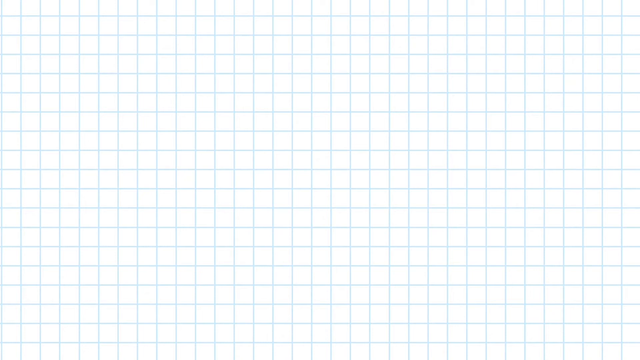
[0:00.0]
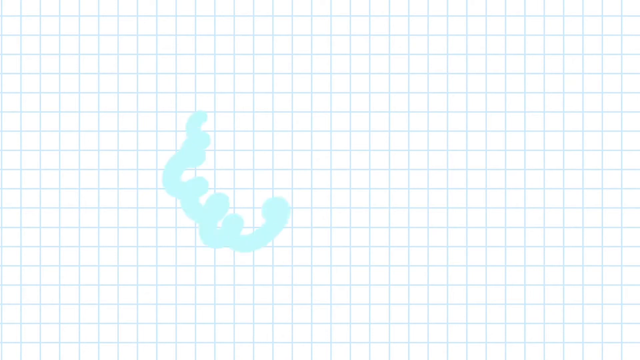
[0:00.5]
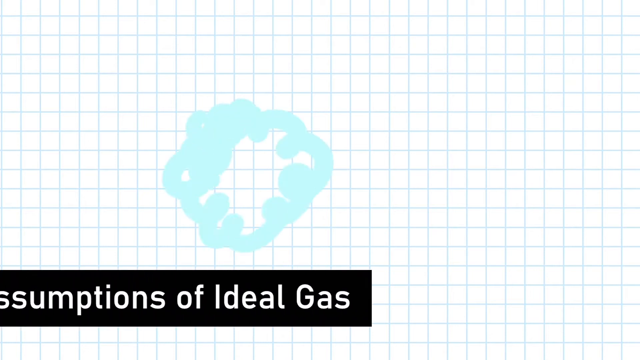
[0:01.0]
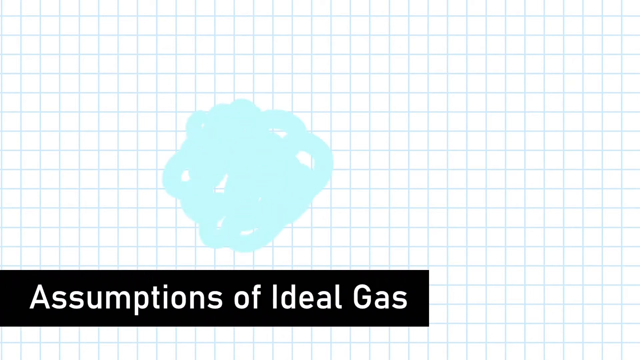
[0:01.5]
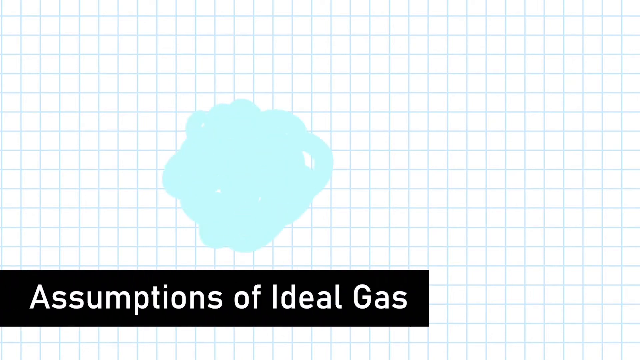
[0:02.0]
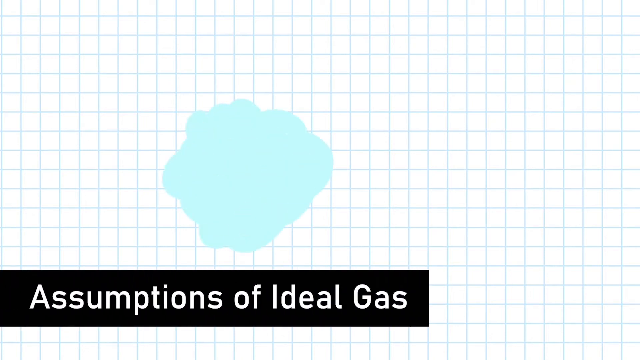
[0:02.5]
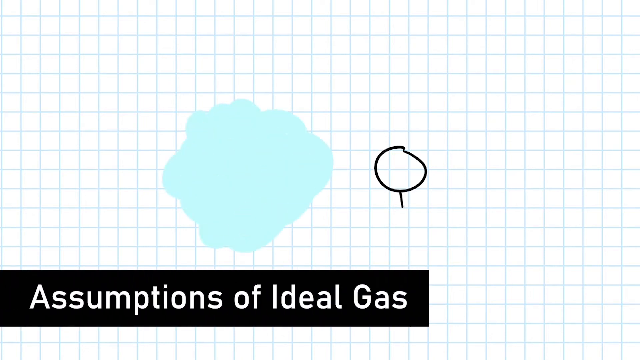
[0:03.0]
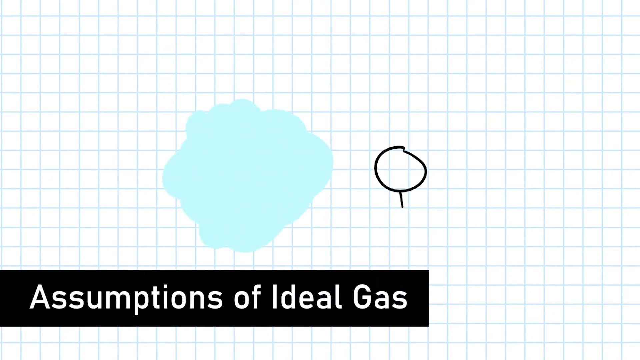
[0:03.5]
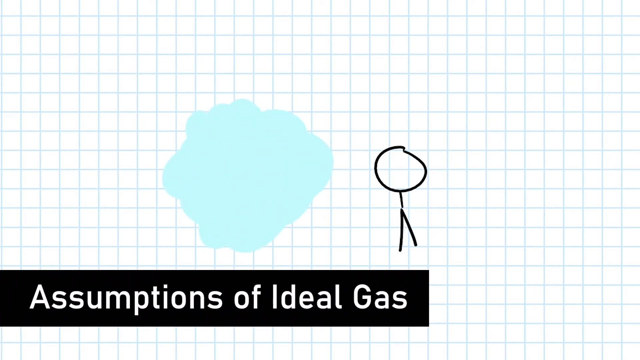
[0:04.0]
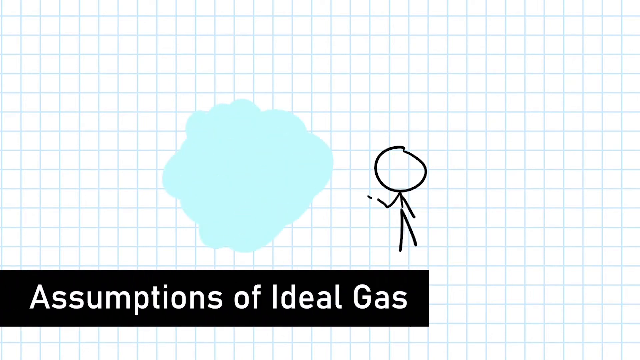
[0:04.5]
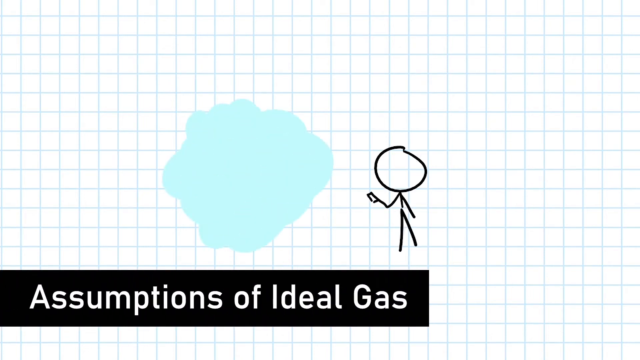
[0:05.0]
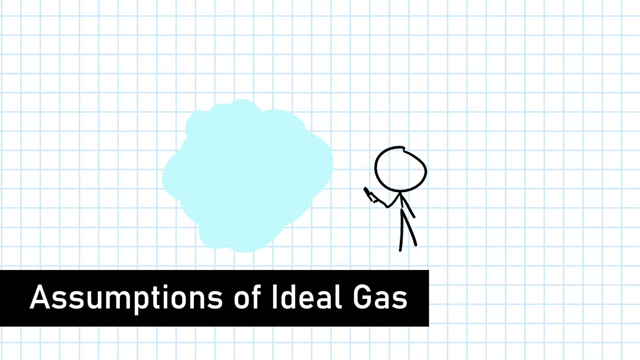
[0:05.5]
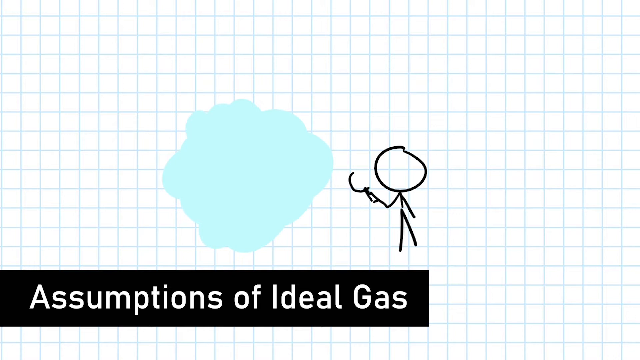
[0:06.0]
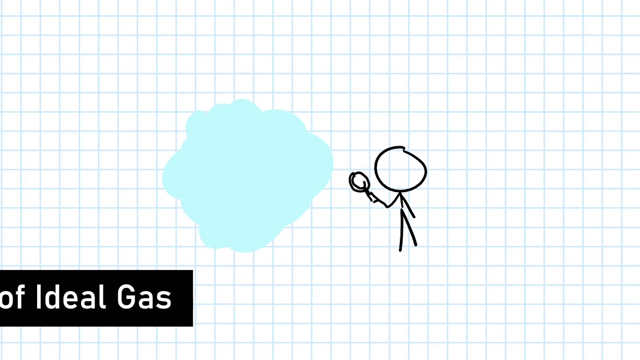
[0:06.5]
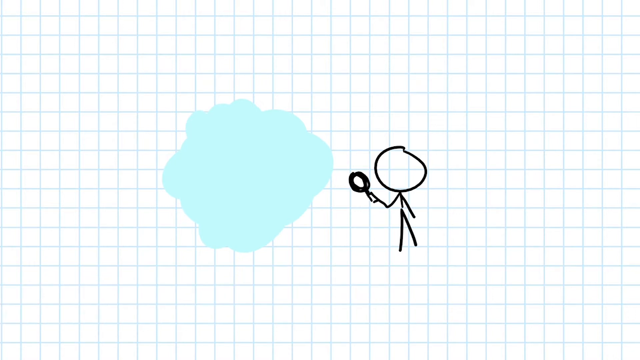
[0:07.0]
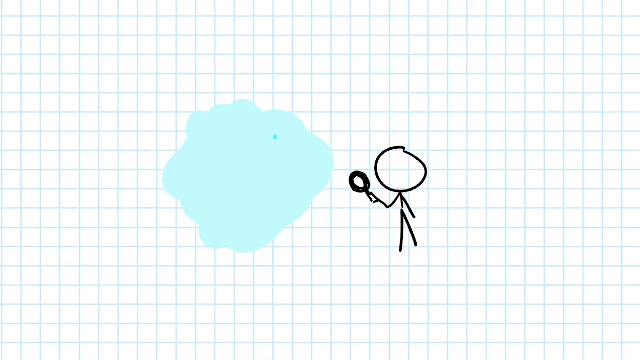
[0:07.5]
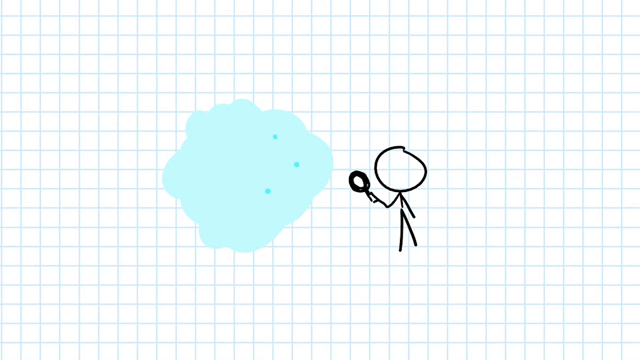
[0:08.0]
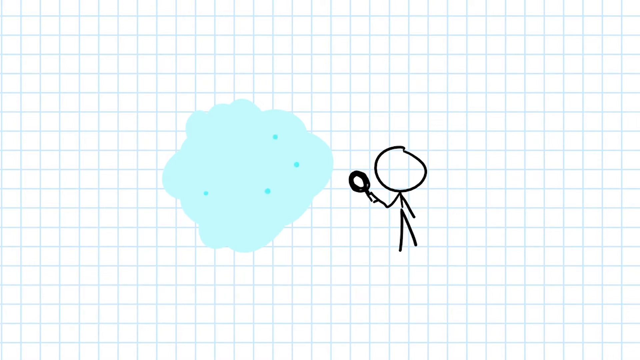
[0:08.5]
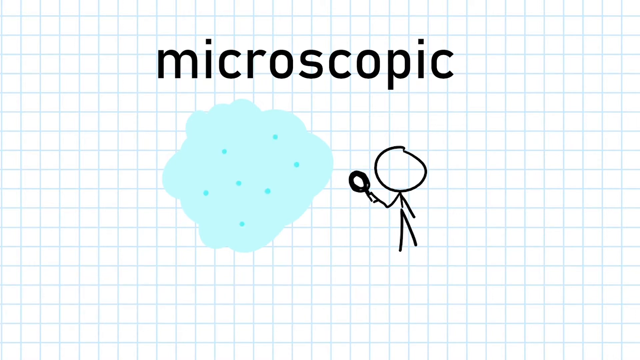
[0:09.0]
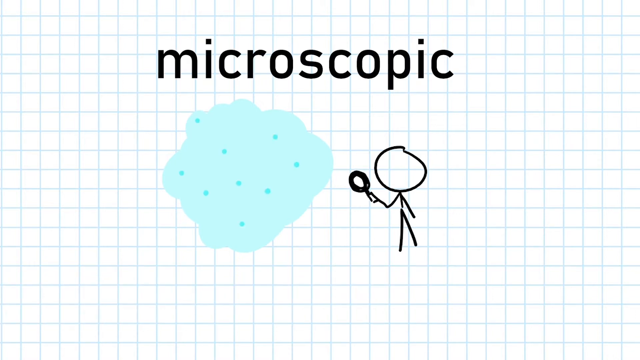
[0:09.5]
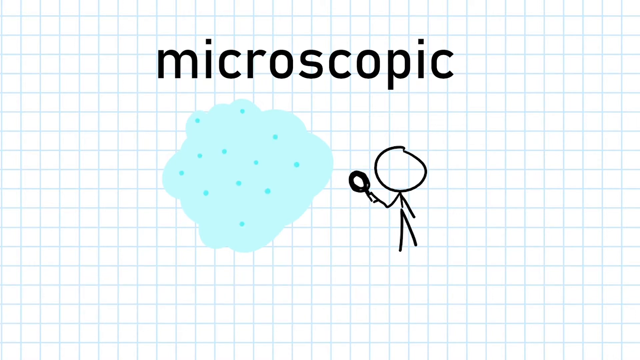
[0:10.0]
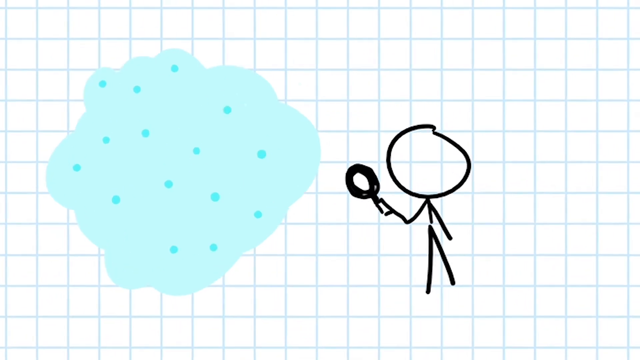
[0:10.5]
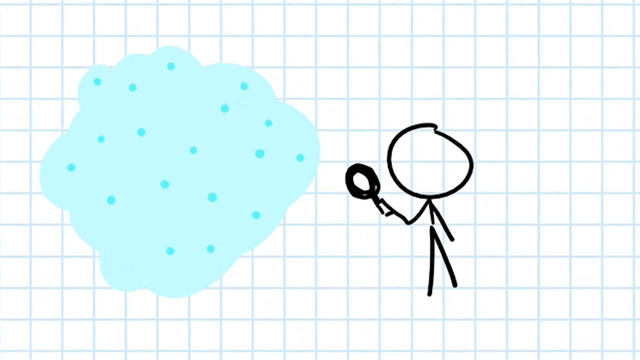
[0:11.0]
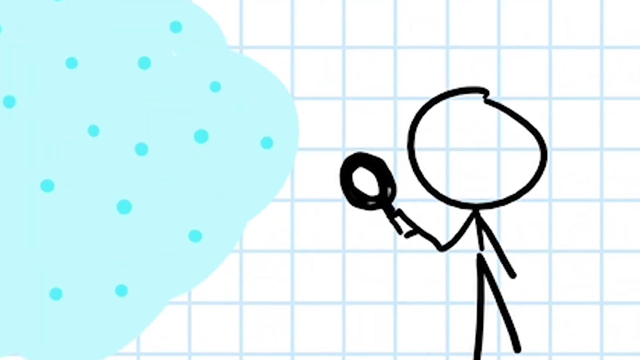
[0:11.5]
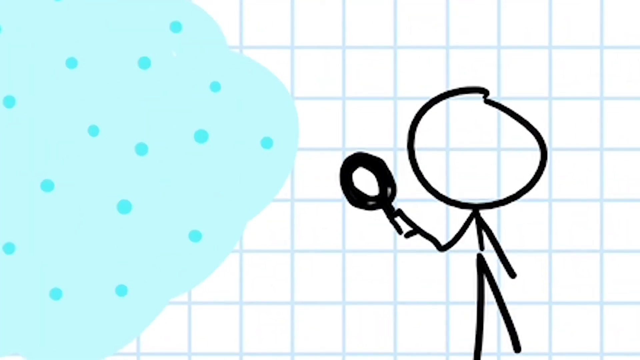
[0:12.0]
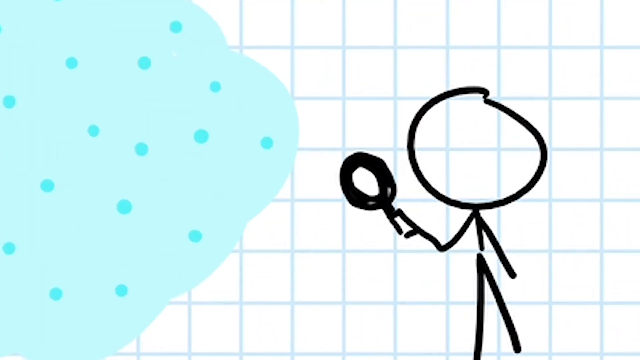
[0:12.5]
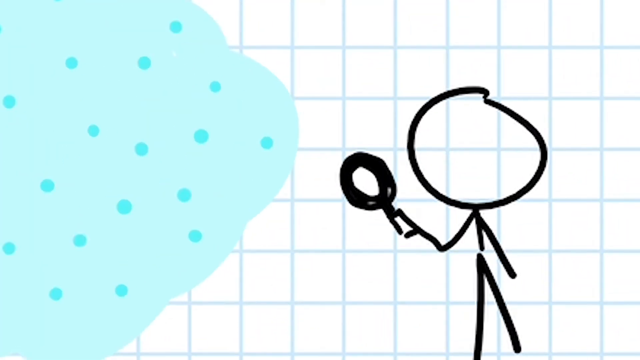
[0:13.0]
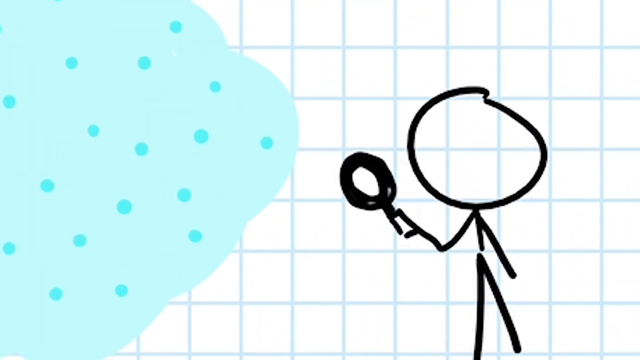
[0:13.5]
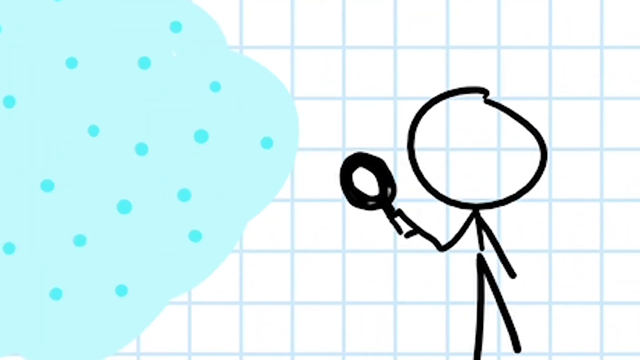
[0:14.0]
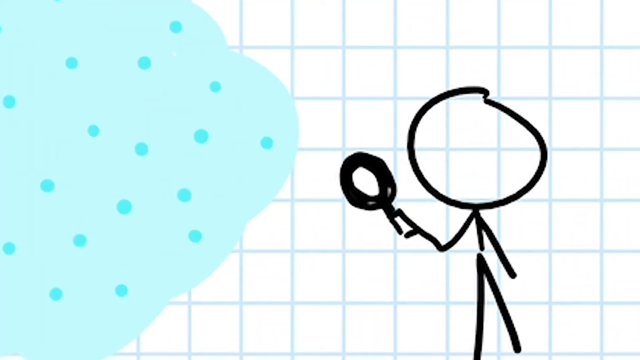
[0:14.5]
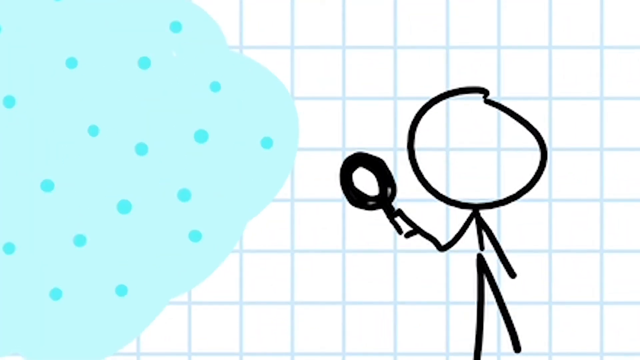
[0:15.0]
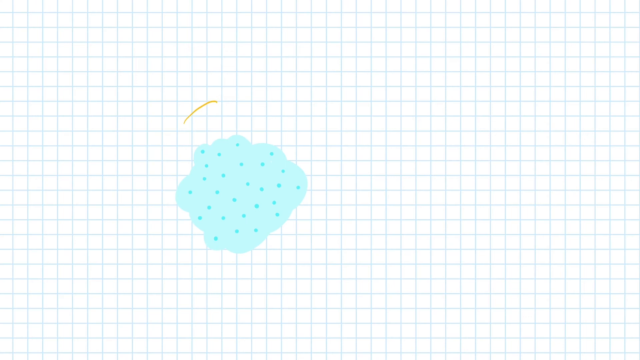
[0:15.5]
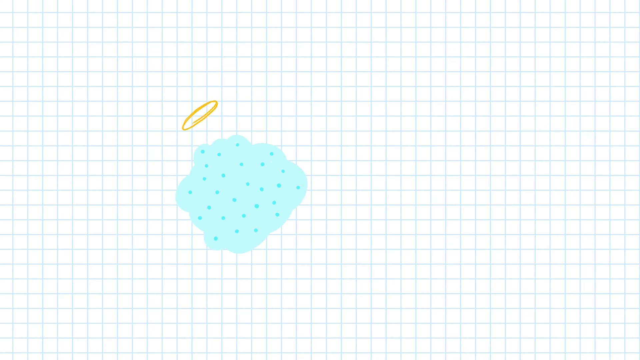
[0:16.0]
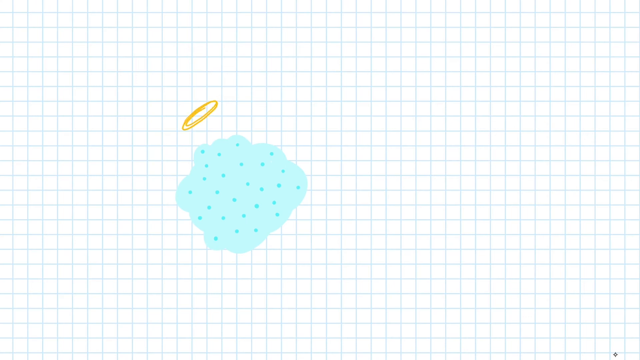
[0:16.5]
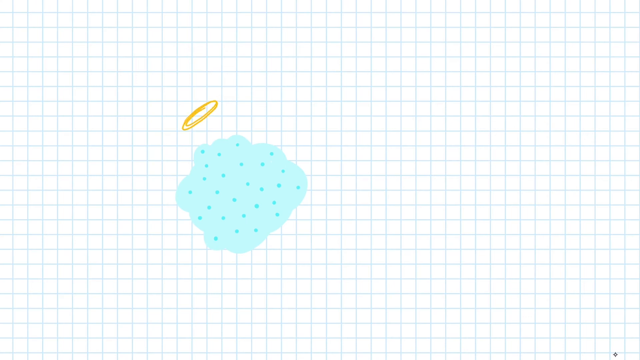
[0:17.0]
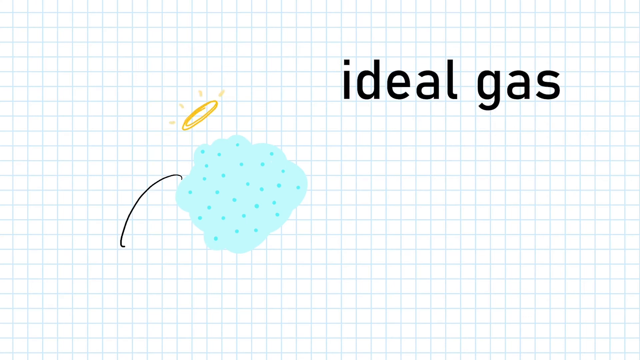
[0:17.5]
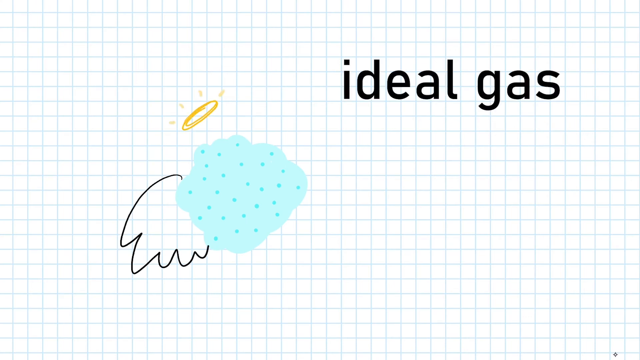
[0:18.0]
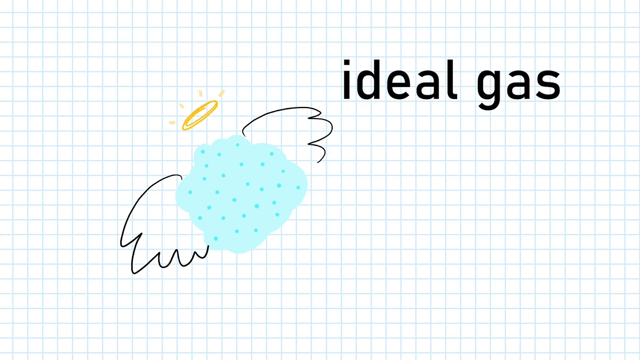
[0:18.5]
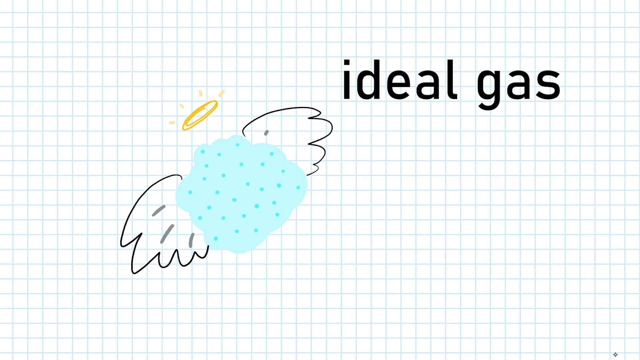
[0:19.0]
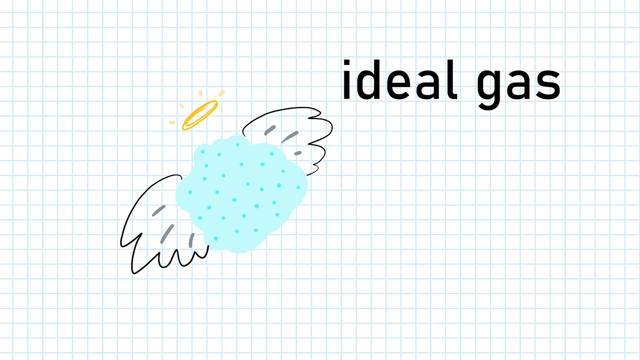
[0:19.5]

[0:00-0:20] An intro sequence shows the text "Assumptions of ideal gas" at the bottom left. On the left is a baby blue, cloudy, smoke-looking structure, and on the right a stick man holds a magnifying glass. "Microscopic" appears at the top, and the stick man kind of looks at the blob. Angel wings are then drawn on the cloud, along with a golden halo; the wings are white with little, kind of flappy wing details. "Ideal gas" appears at the top right. Everything is done on what looks like grid paper.